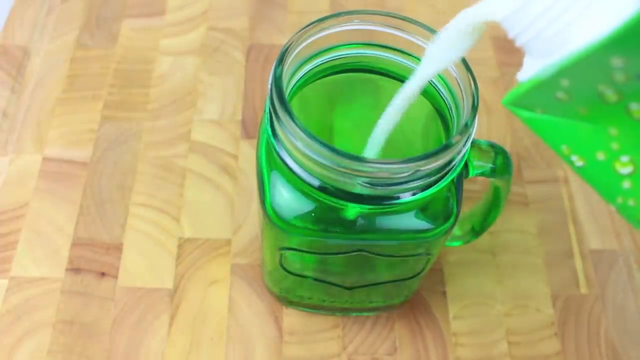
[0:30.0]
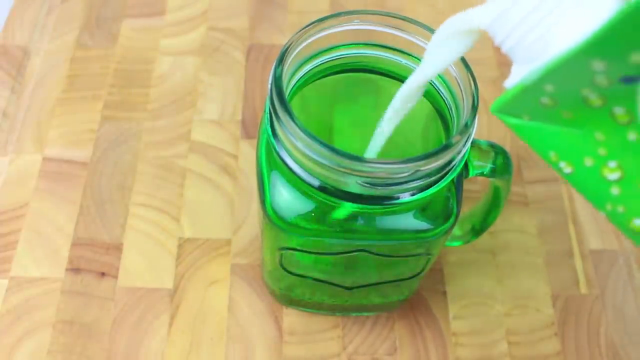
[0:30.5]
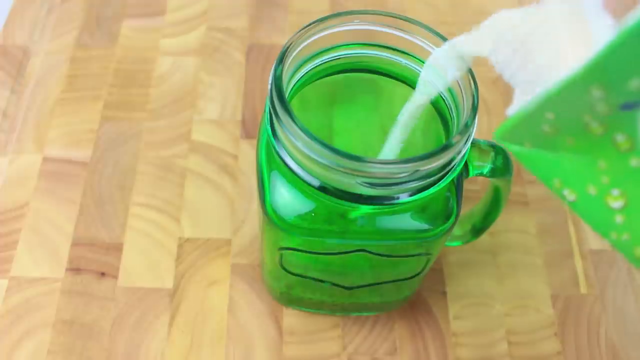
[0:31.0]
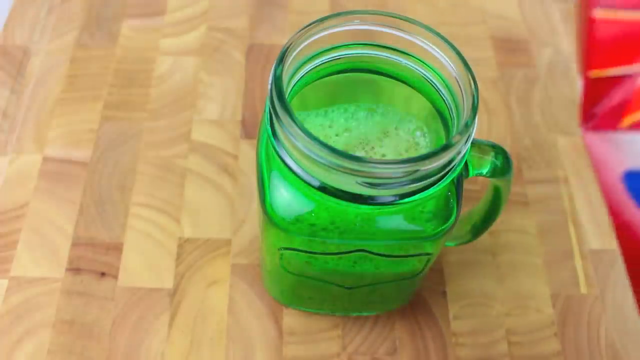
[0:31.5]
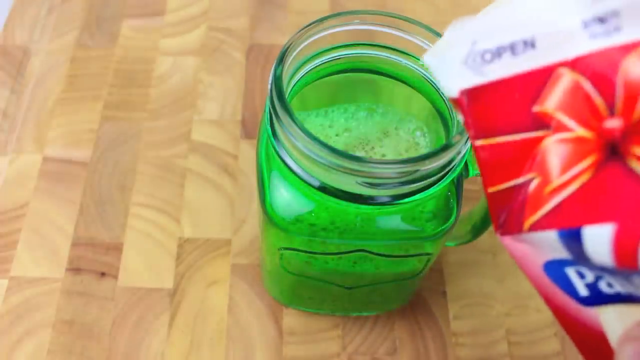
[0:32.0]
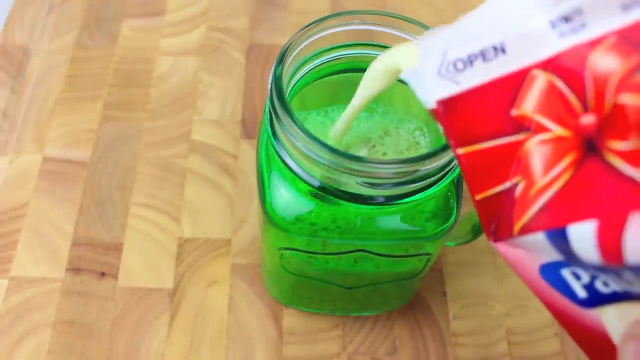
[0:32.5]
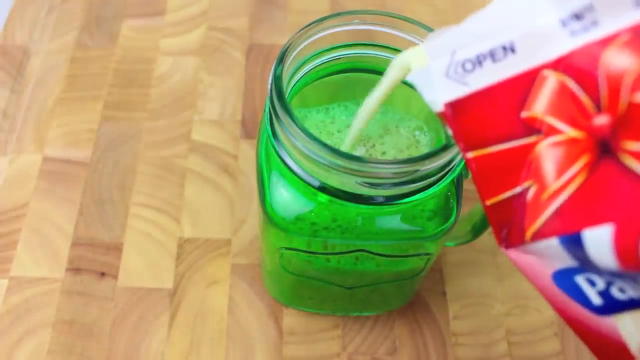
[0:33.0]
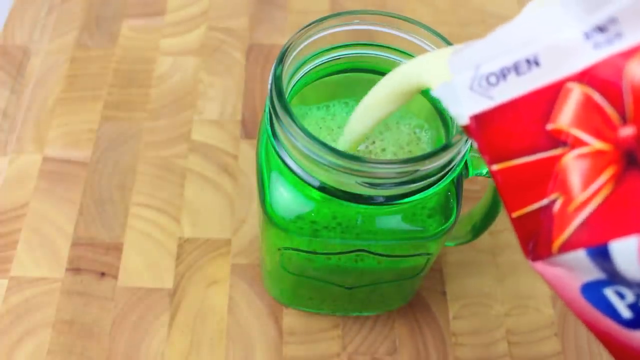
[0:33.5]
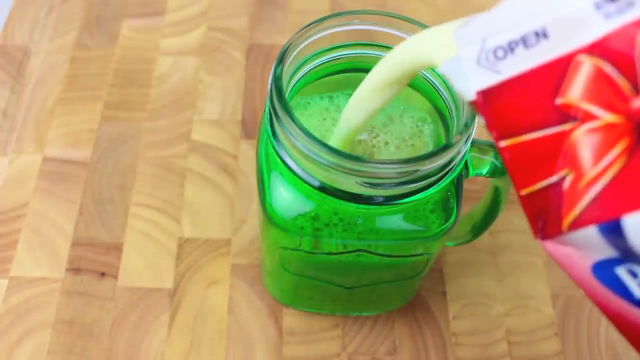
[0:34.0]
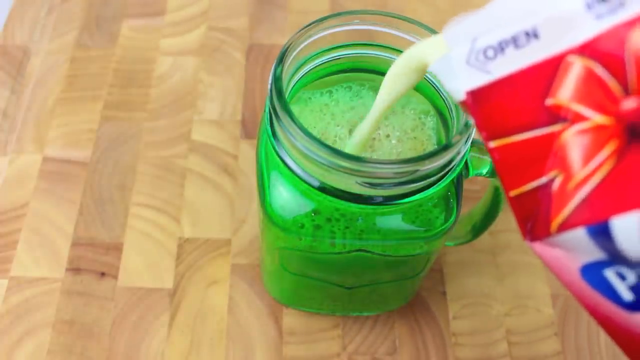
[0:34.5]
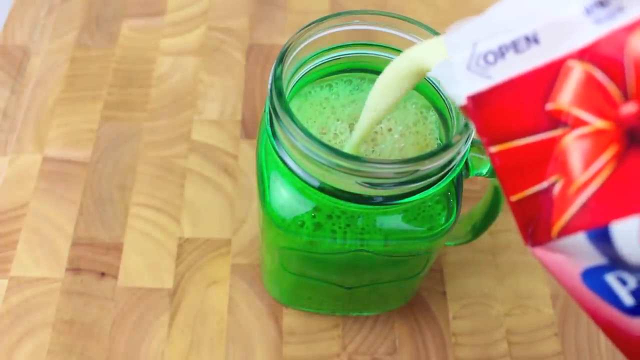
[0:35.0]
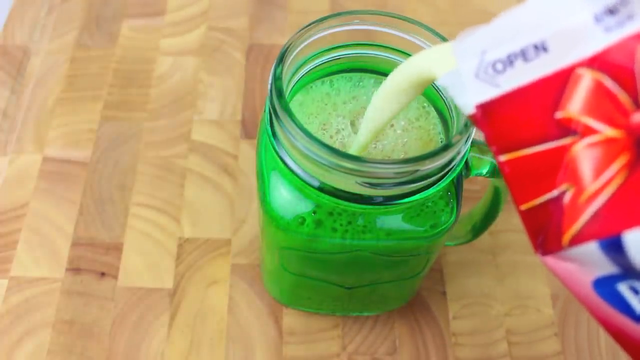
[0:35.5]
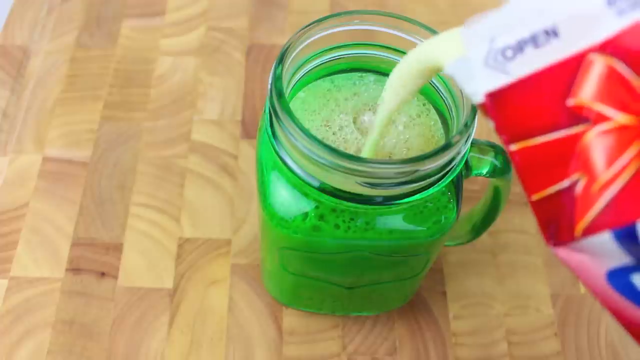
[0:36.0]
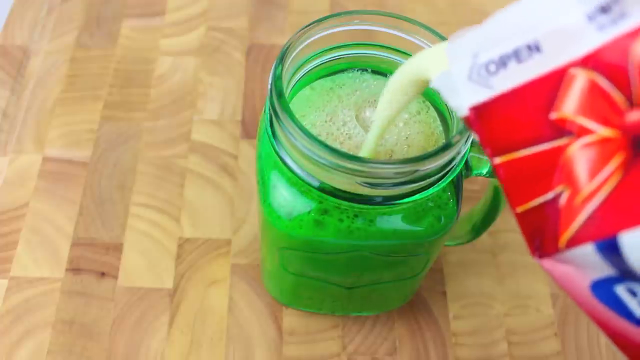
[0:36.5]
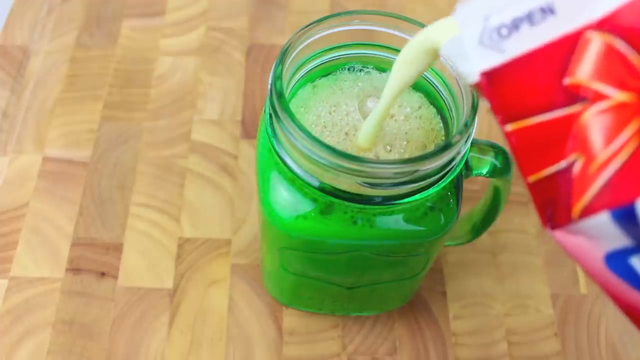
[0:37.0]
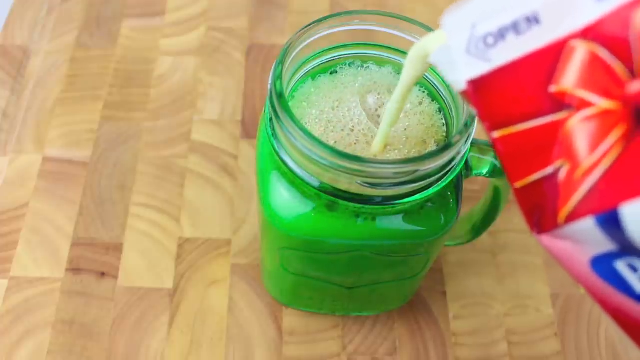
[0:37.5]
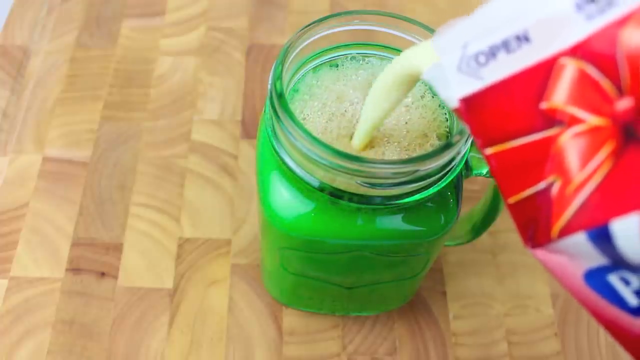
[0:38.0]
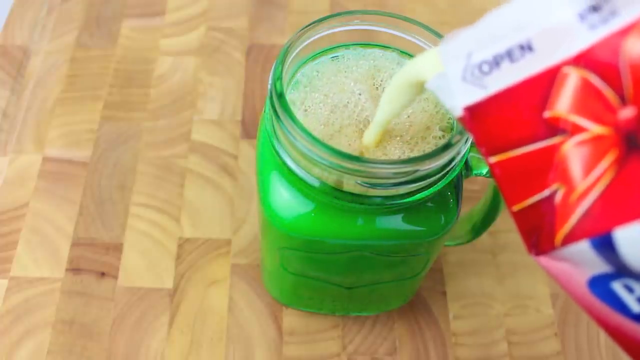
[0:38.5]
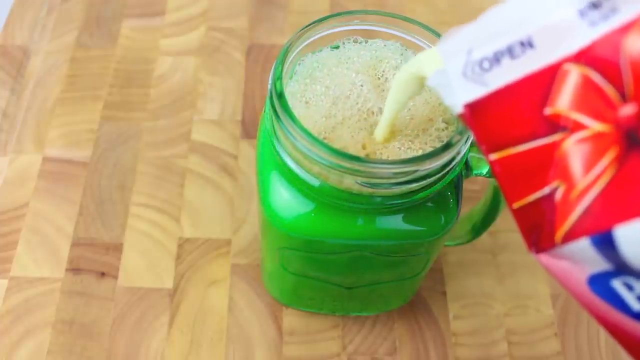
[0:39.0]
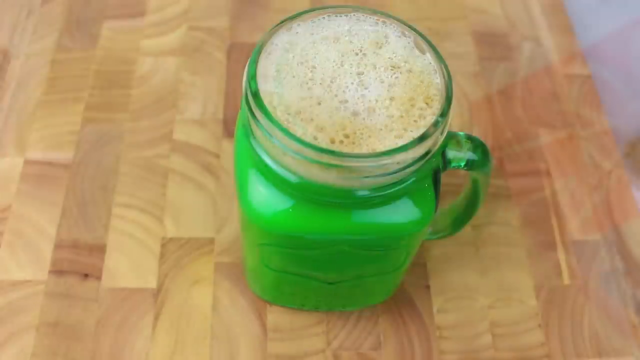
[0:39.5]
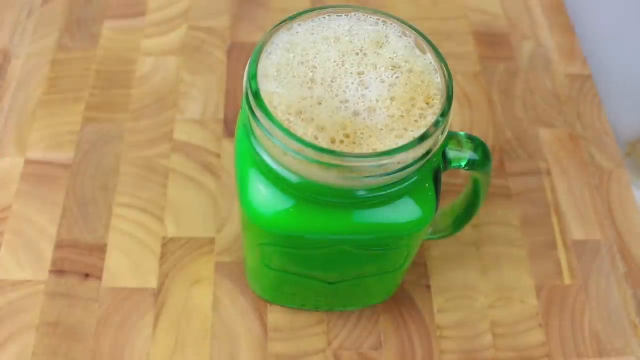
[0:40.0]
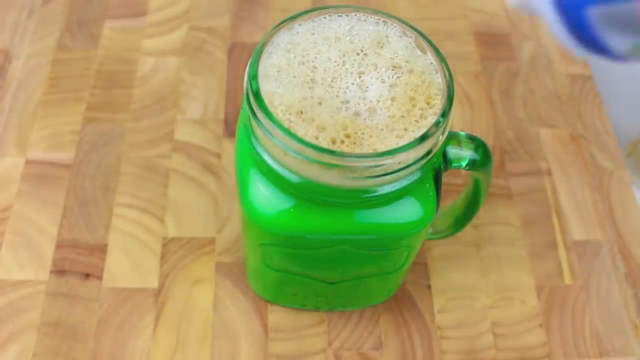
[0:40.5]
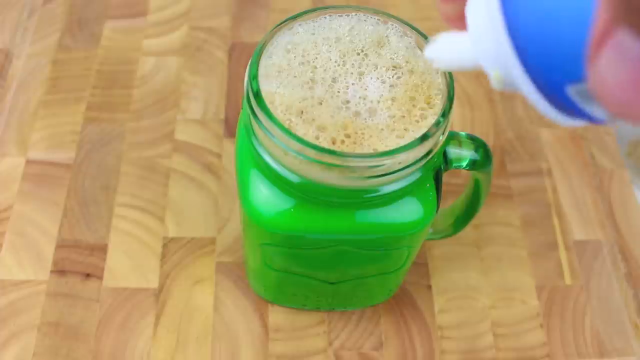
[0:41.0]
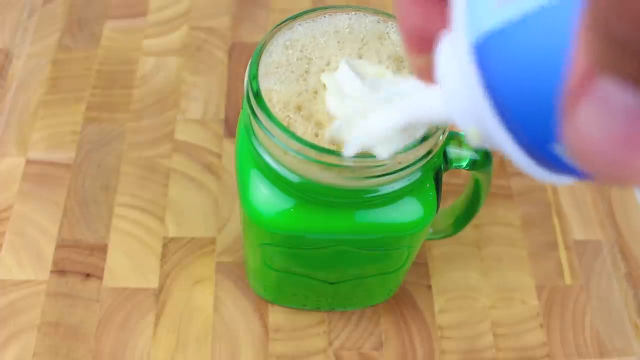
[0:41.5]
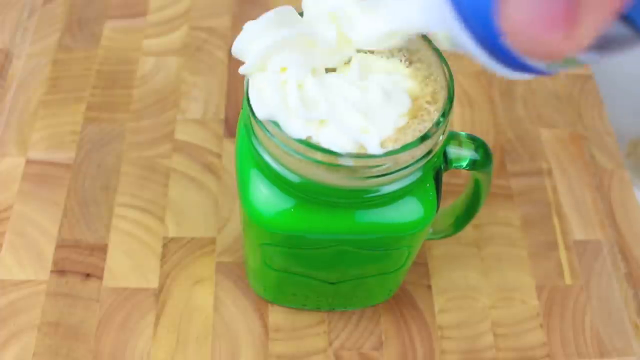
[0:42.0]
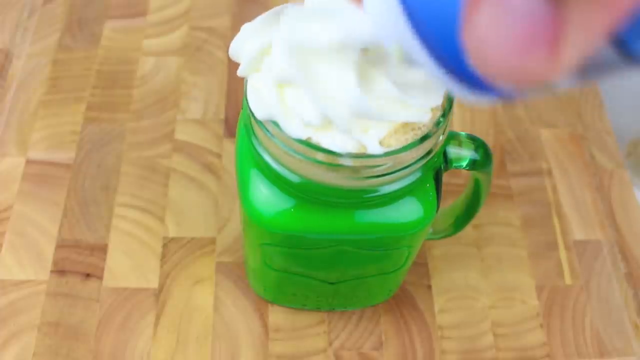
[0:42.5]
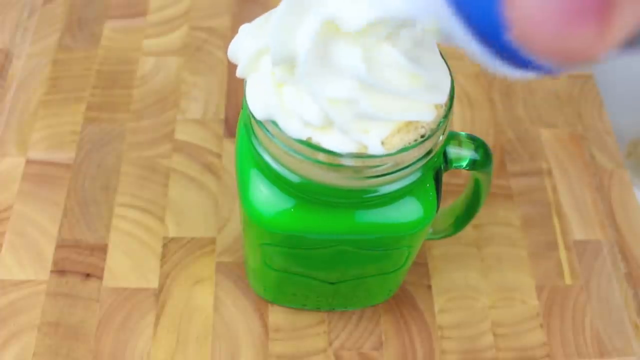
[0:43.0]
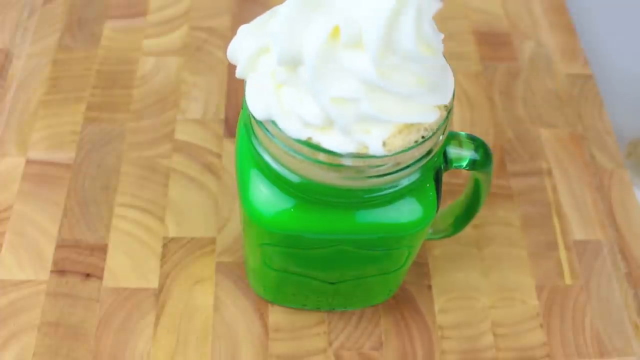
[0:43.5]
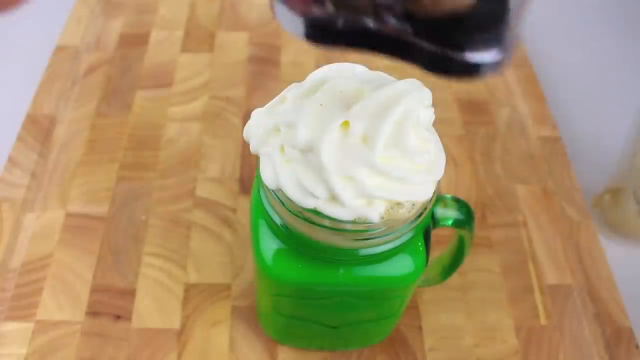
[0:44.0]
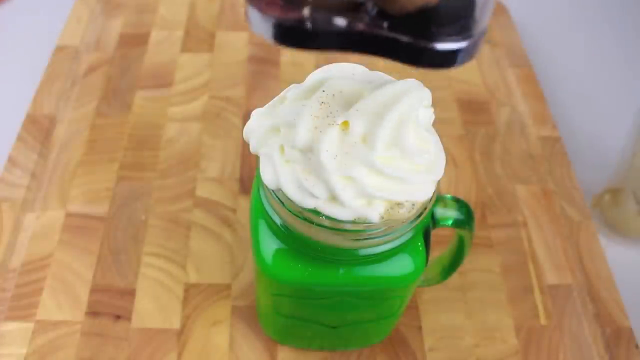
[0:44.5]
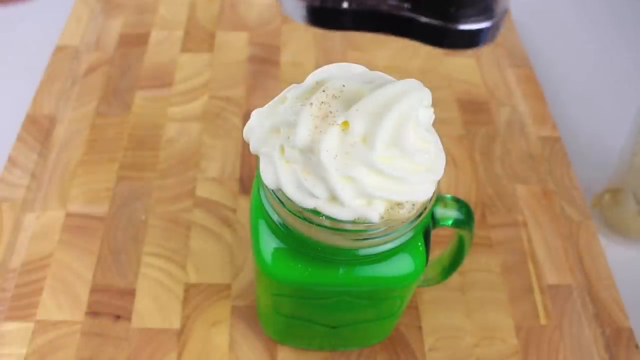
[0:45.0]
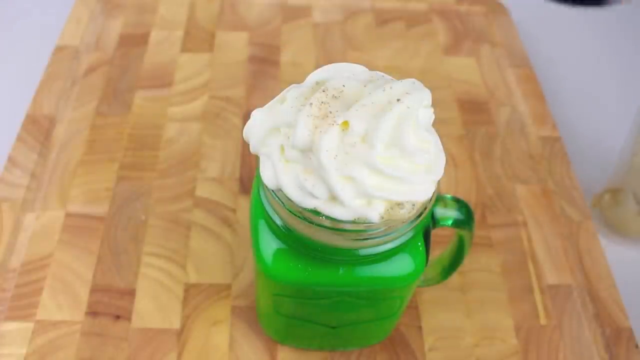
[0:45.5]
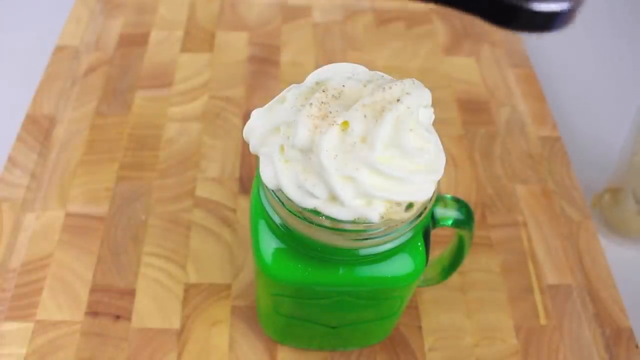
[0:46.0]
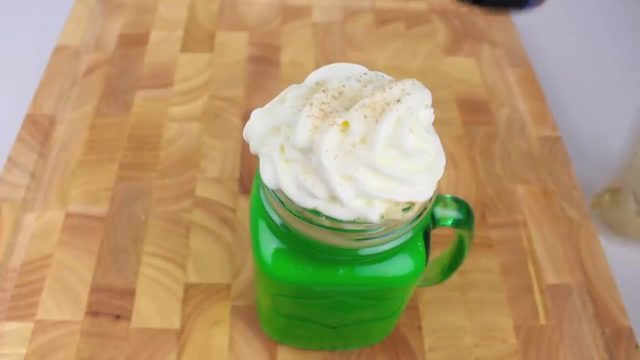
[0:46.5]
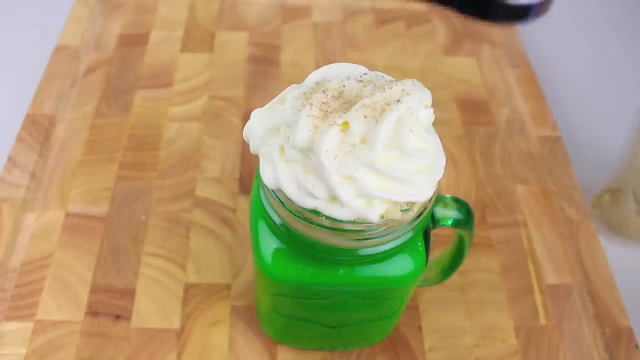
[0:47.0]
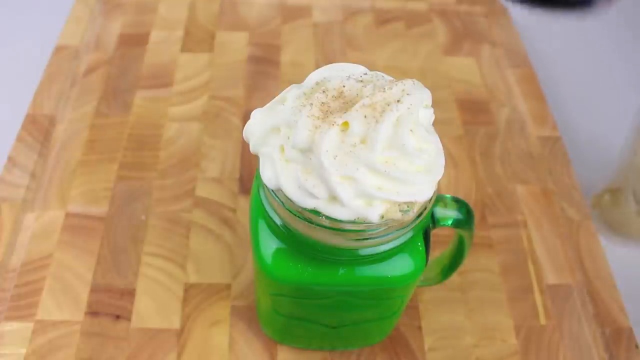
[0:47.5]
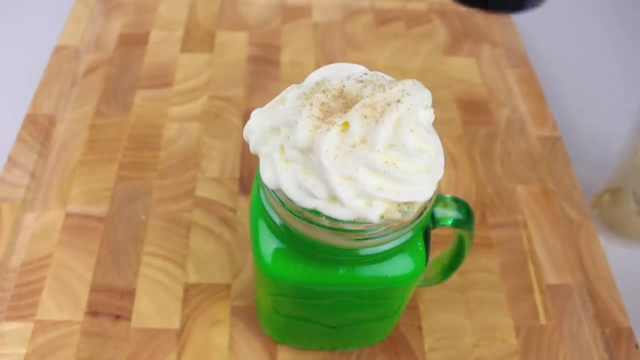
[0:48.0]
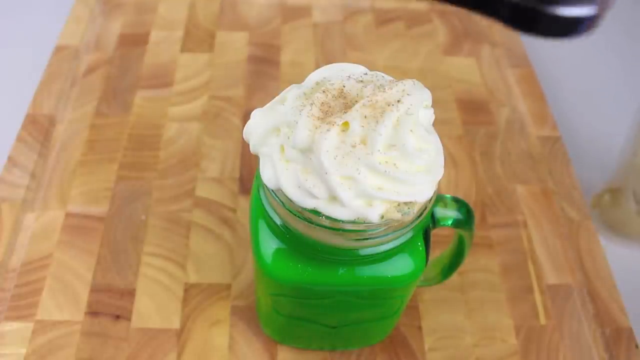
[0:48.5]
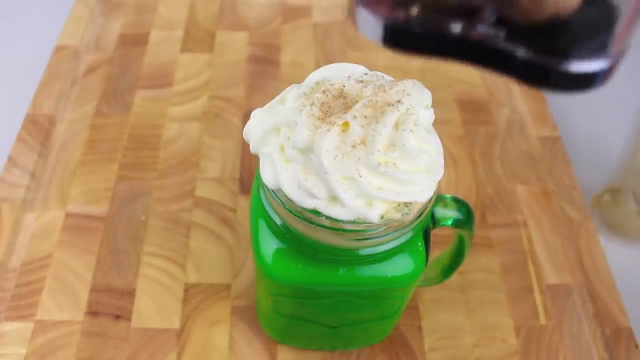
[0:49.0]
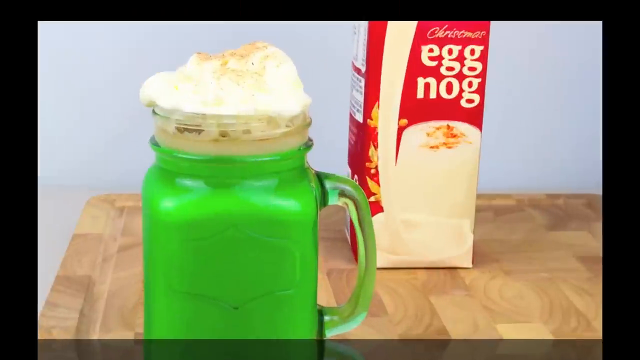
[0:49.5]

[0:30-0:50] Todd continues pouring a white liquid into the glass of green liquid, which already has the brown, muddy liquid added. He holds a cardboard carton that appears to be about one liter in capacity. It is lime green with an illustration of droplets on the side and has a white spout with visible threads near the top right of the image. The milk makes a spiral as it moves from right to left into roughly the center of the drinking glass on the butcher block table. Next he adds another liquid from a stereotypical milk carton, which has an illustration of a bow on a red gift at its top and the word "open" near its upper left. He pours the white liquid from it into the glass below him, and it foams at the top as he fills the glass nearly to the top, revealing the finished drink. He then takes a blue aerosol can and squirts whipped cream from the upper right of the image, diagonally and slightly down to the left, onto the top of the foaming liquid, which now looks lime green. He makes a swirl of whipped cream and sprinkles some brown items on it, probably cinnamon. In the final second, the creation is briefly identified as eggnog.